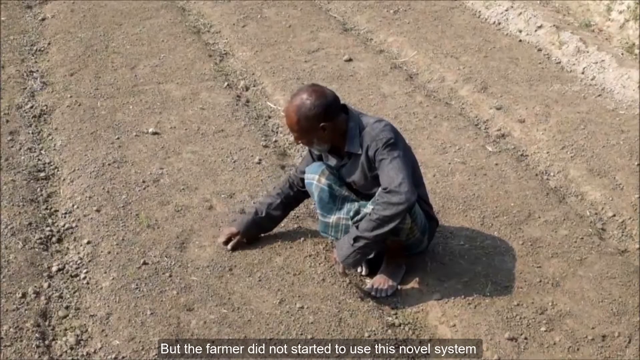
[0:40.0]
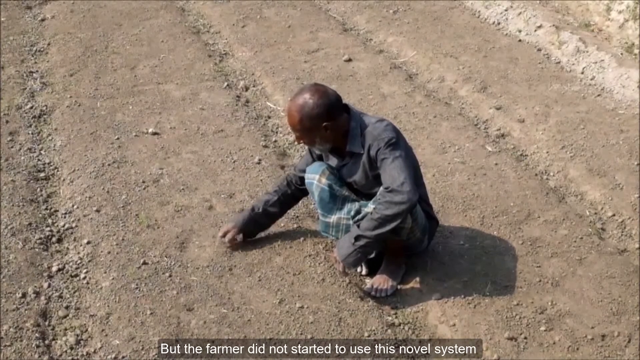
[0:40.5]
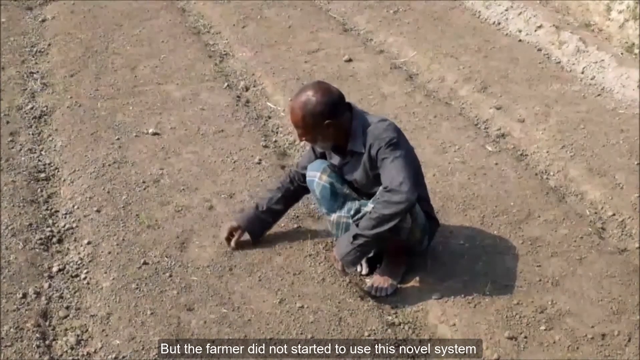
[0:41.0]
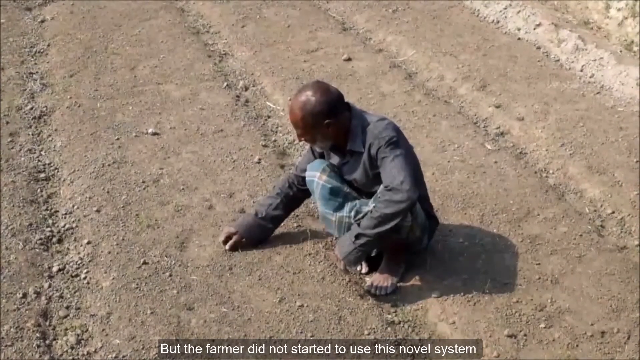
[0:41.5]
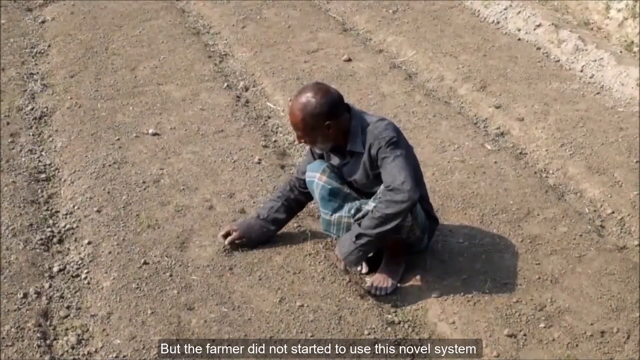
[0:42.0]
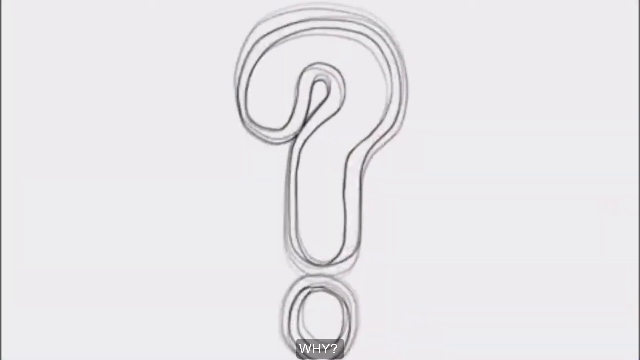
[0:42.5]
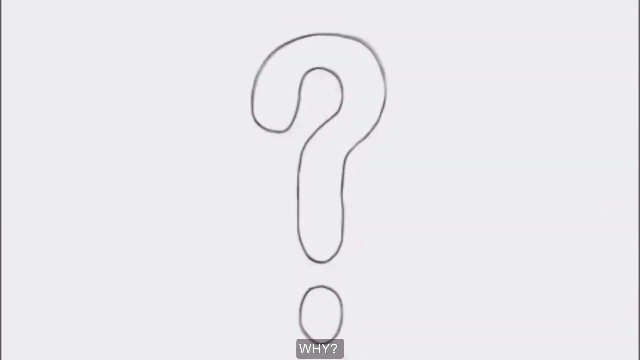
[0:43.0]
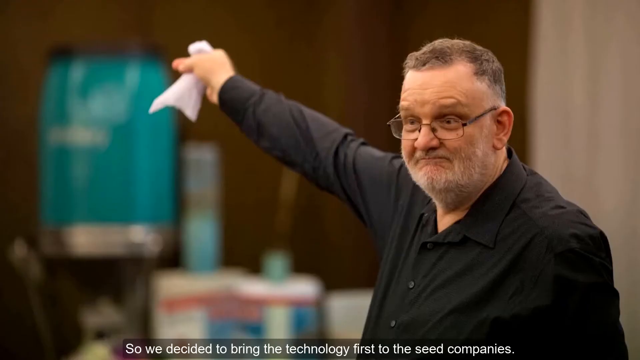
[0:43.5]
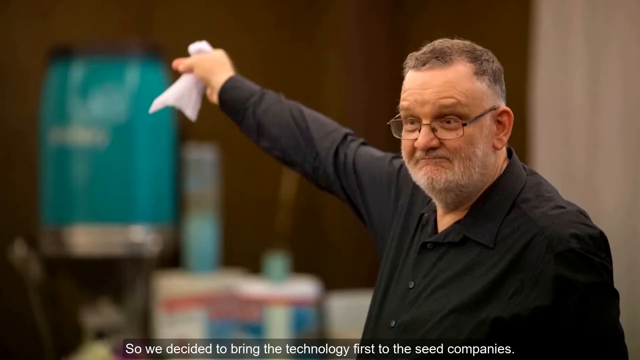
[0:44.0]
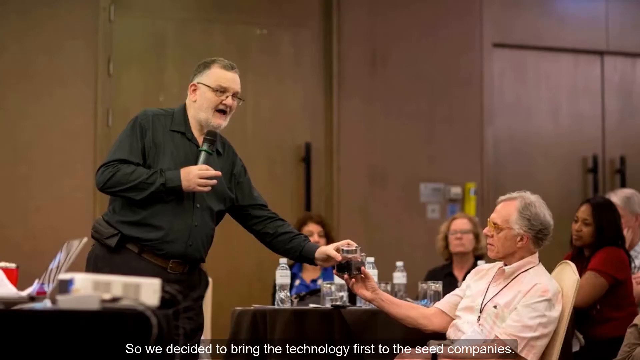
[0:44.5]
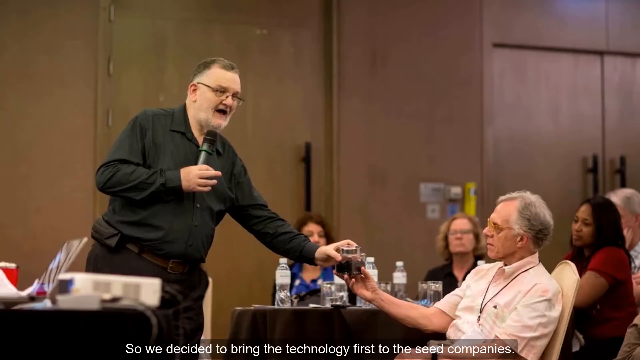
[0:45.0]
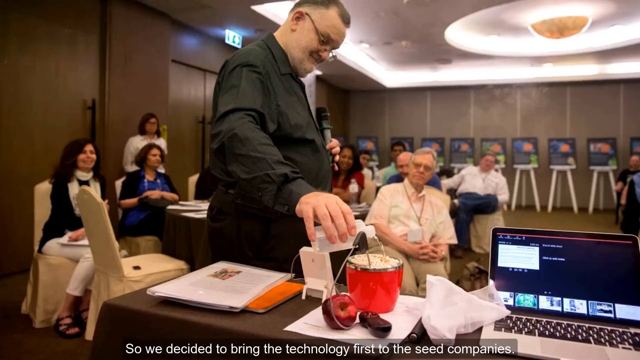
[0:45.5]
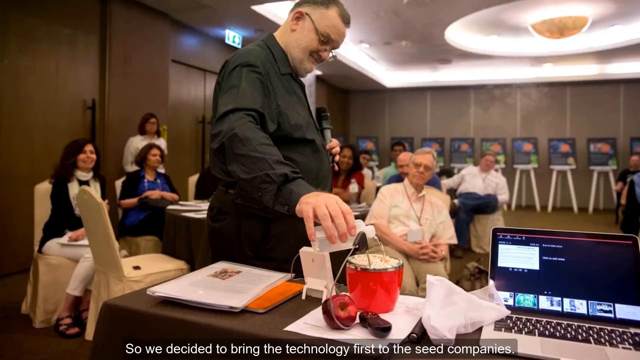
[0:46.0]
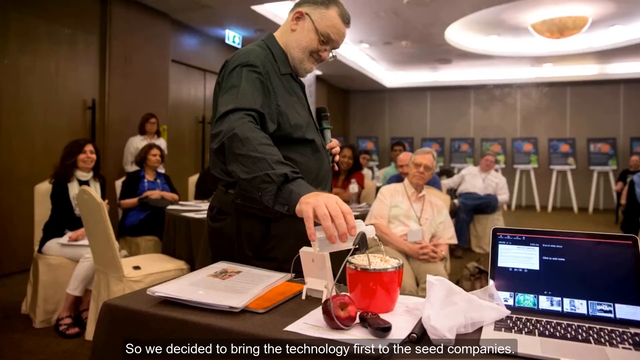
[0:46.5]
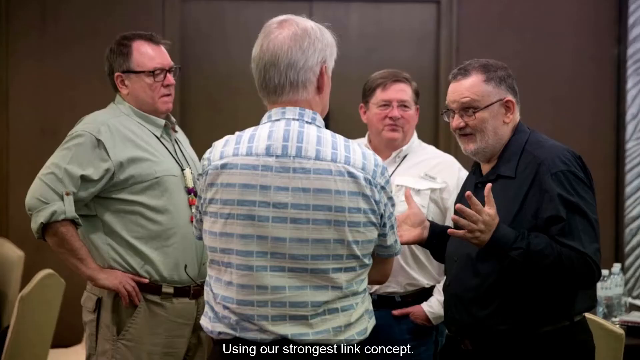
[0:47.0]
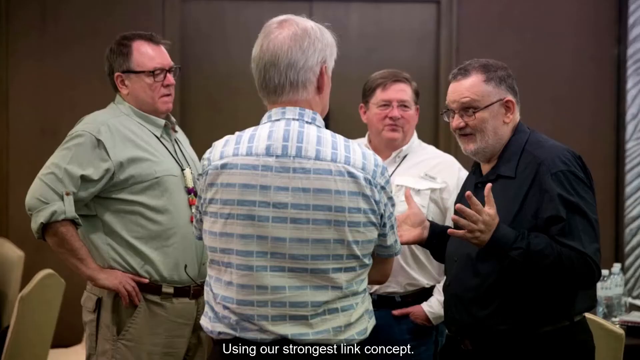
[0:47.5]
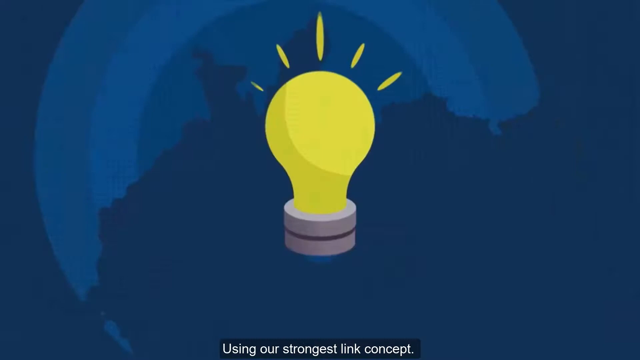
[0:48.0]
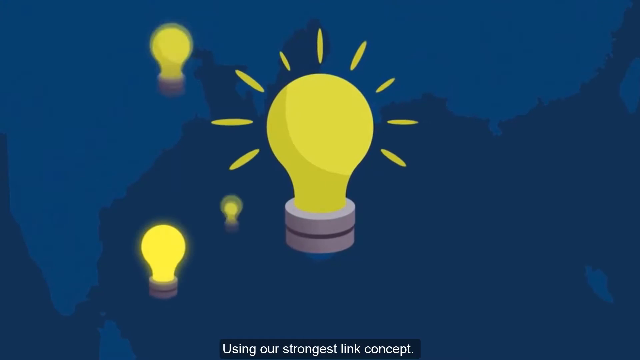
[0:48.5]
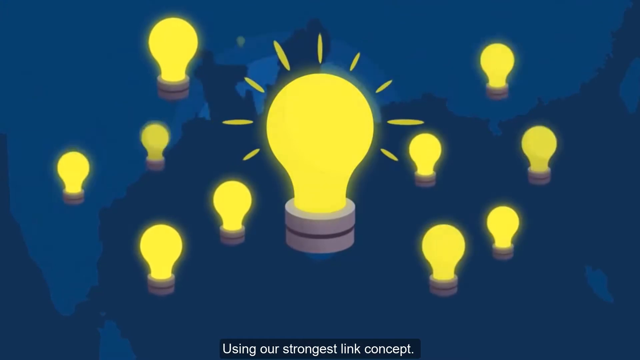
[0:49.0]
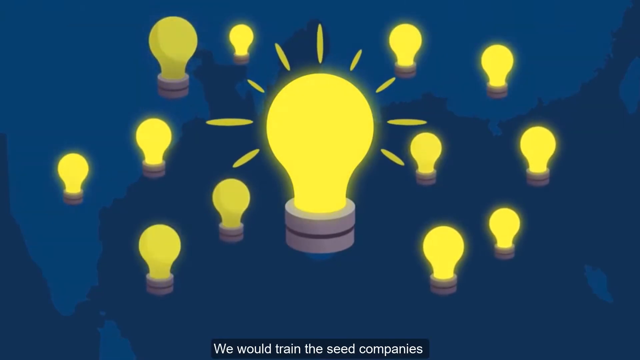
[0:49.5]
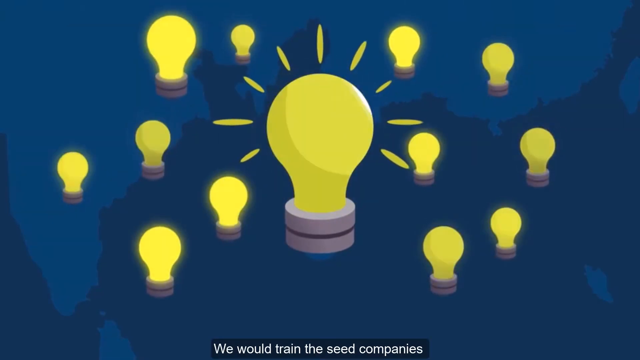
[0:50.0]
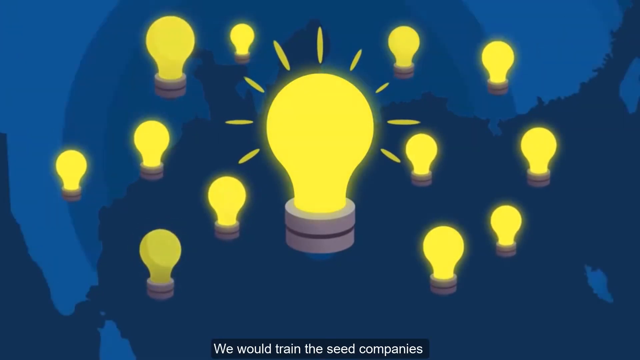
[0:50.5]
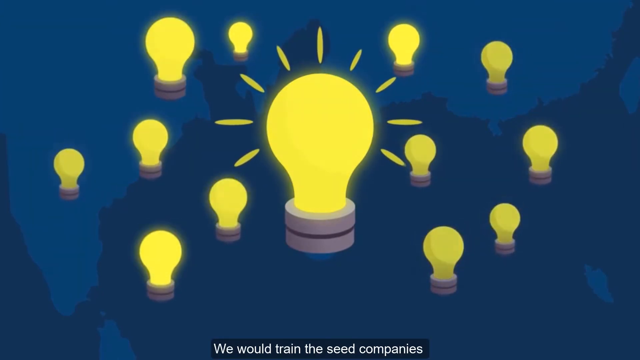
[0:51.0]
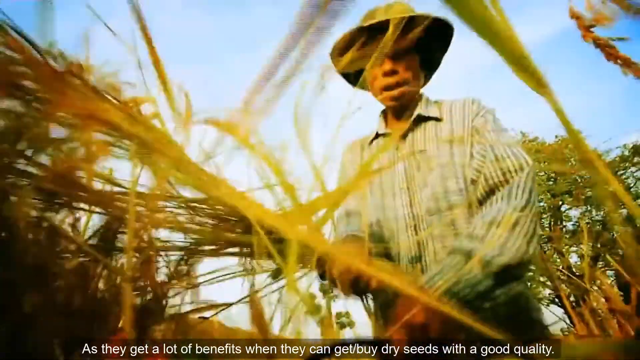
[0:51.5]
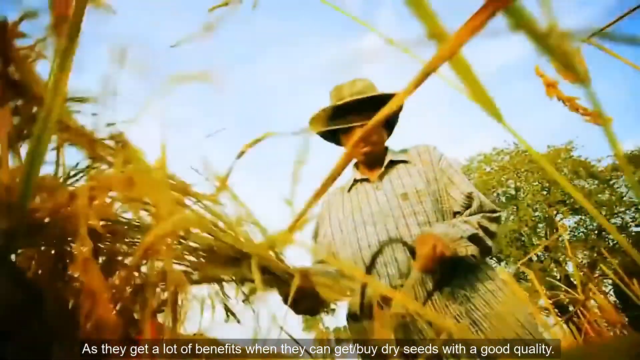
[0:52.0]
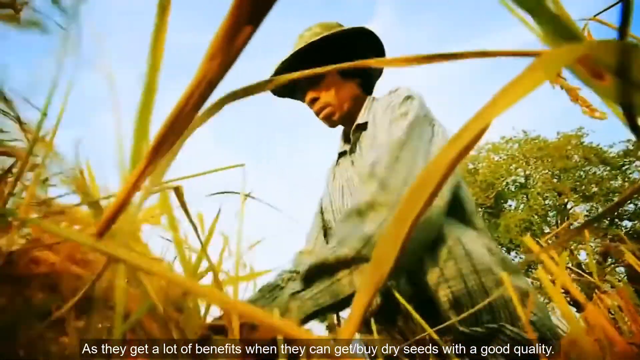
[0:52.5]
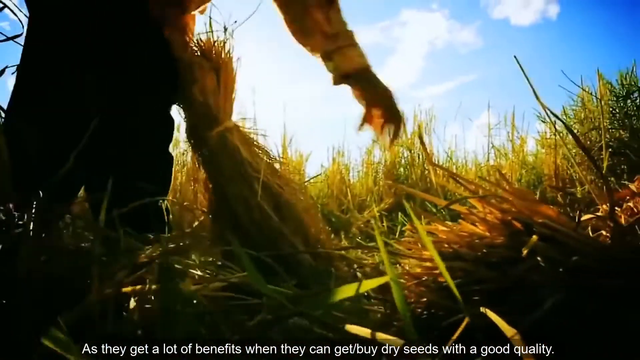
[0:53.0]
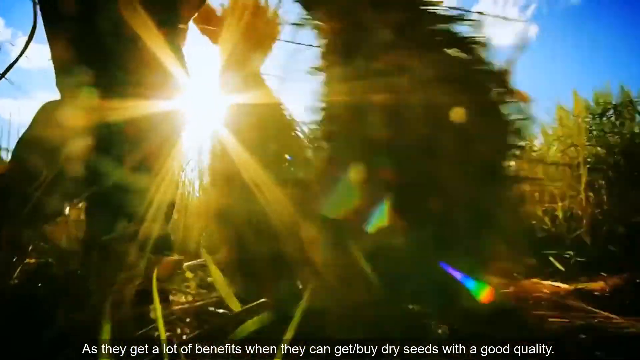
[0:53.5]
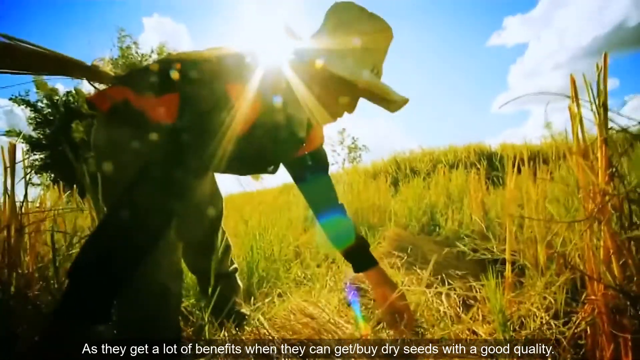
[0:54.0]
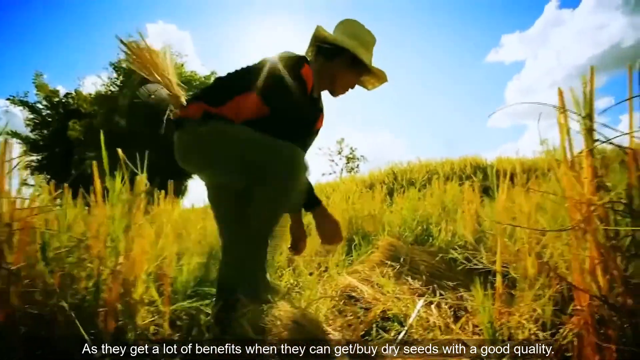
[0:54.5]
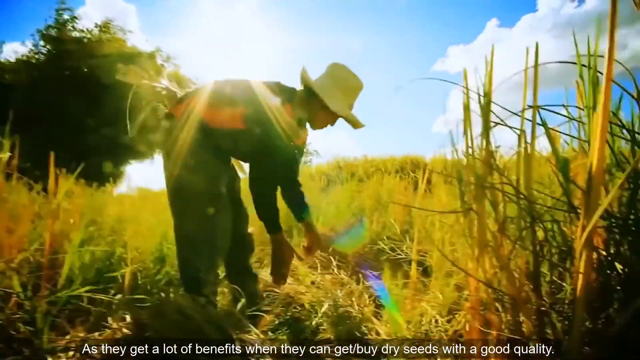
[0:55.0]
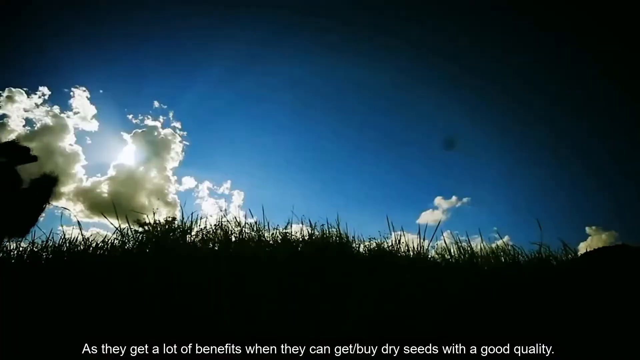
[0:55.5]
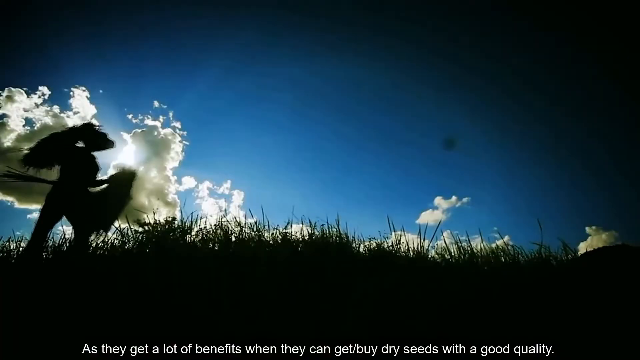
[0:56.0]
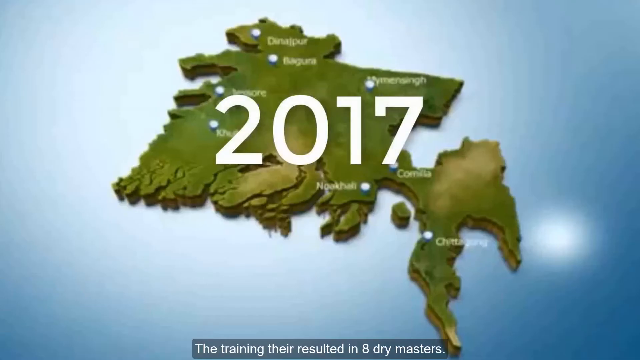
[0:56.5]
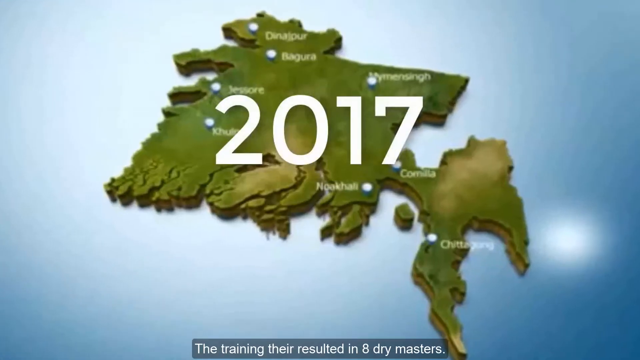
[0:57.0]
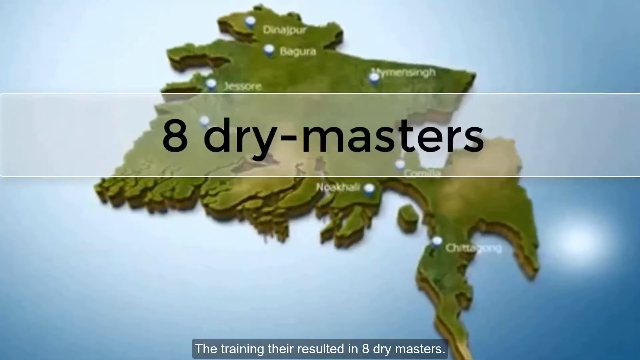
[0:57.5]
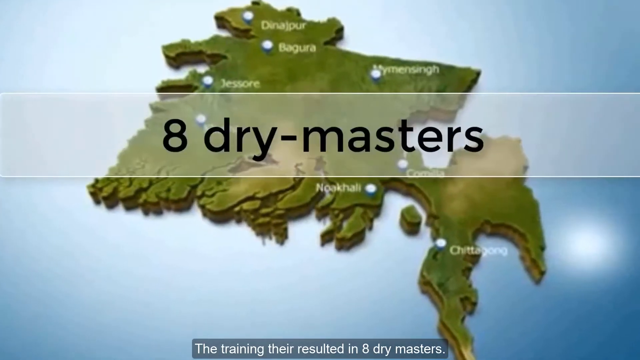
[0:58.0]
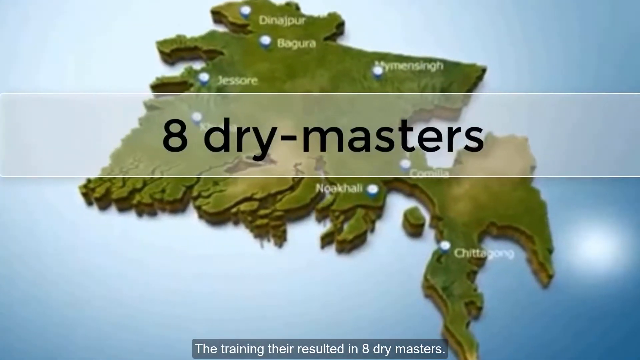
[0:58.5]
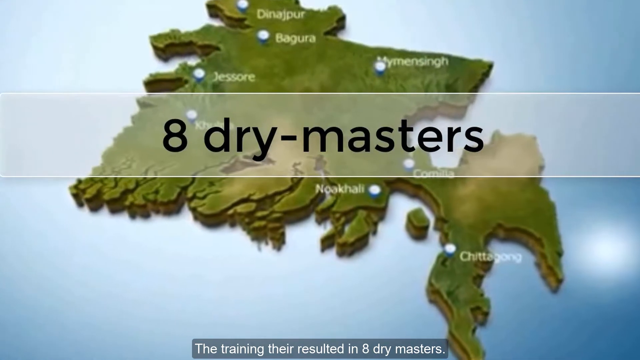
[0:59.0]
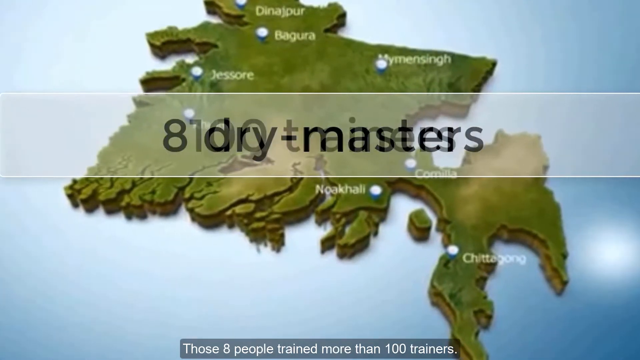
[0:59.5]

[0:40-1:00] A video shows what looks like an elderly man squatting in a dirt field, maybe a farm, with no crops growing; there are divots in the dirt as though seed was planted, but nothing has grown yet. He has his right arm extended and is kind of picking into the dirt a little. A very quick image follows of a question mark drawn against a white screen. Several photo snippets then show the man in the long-sleeve black shirt with his microphone talking to groups of about four people, his hands gesturing out. Next is a graphic with light bulbs against a blue background: one large yellow bulb with about 10 smaller ones around it. Another video shows a man who again looks like he is maybe from Bangladesh, farming outside, filmed from a low camera angle in sort of accelerated, fast motion. The video quickly moves to a map with "2017" in front; the land looks like an island, with many cities labeled, mostly too small to read, one of them being Bagura.